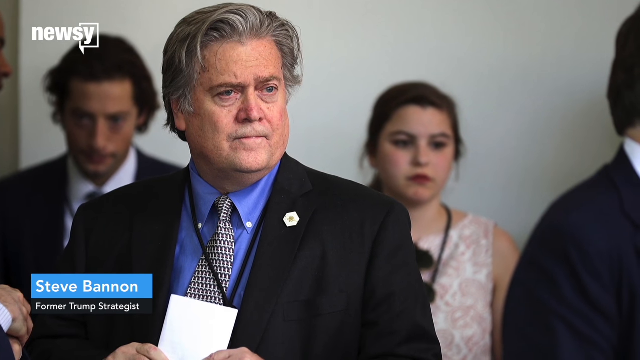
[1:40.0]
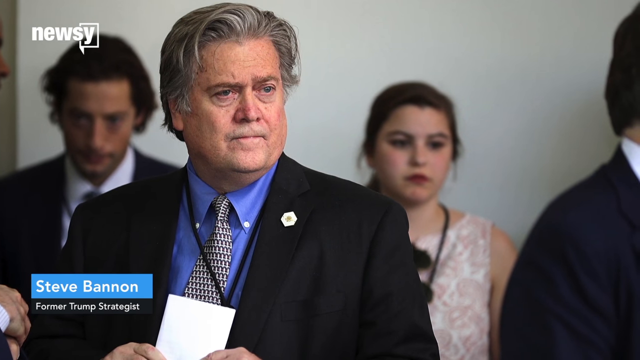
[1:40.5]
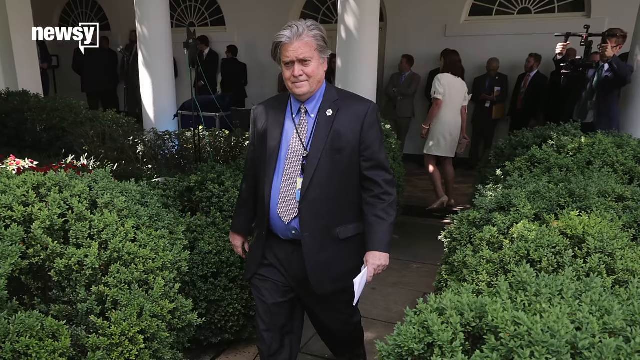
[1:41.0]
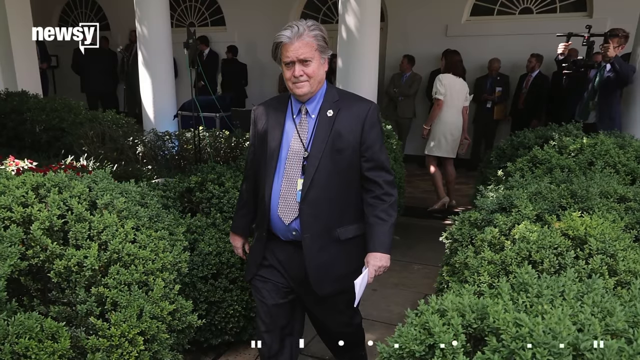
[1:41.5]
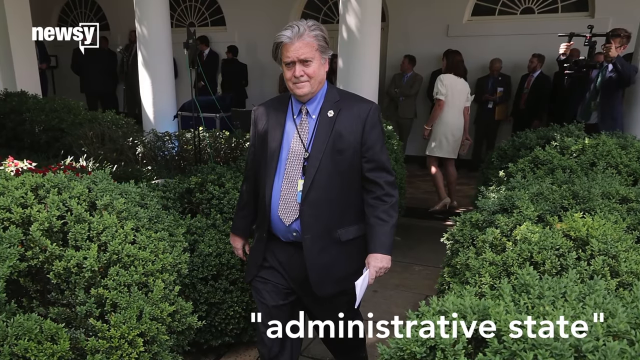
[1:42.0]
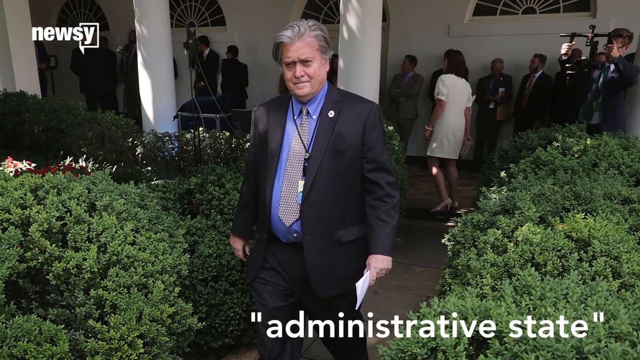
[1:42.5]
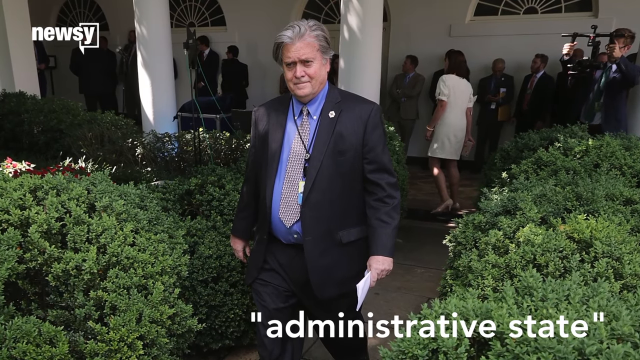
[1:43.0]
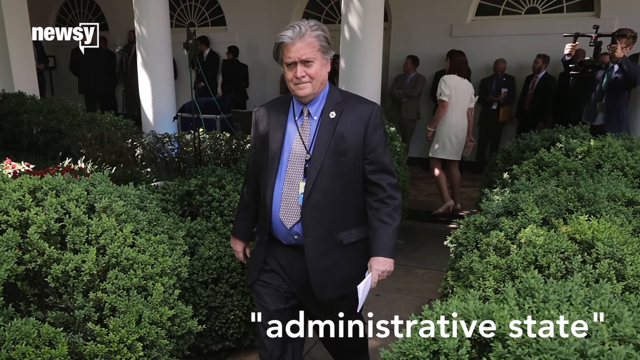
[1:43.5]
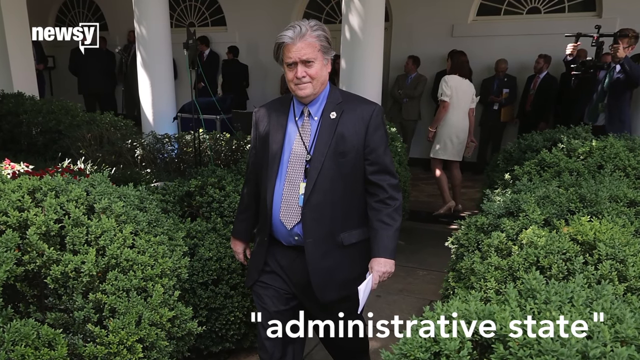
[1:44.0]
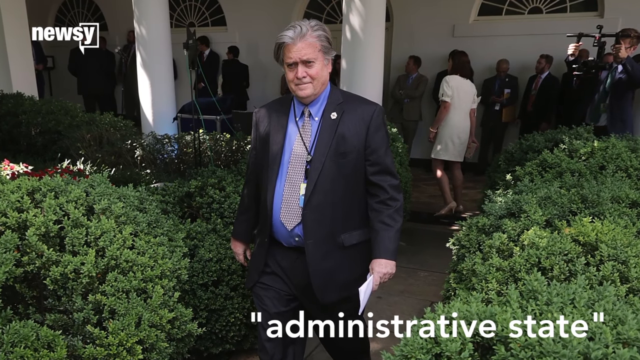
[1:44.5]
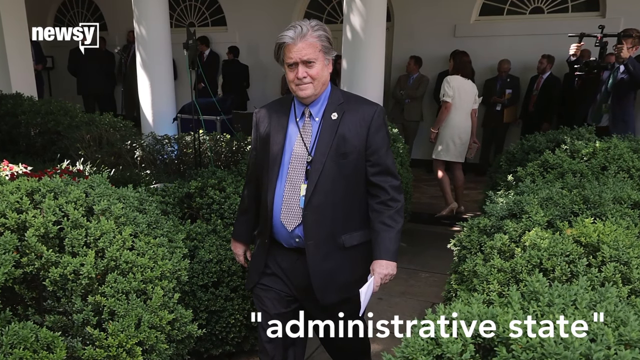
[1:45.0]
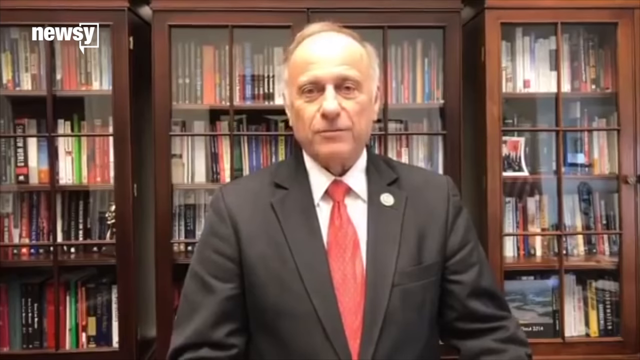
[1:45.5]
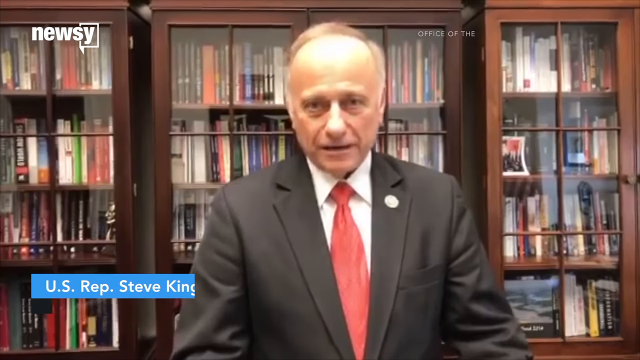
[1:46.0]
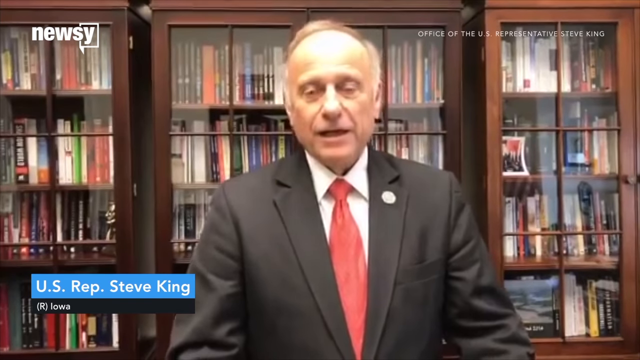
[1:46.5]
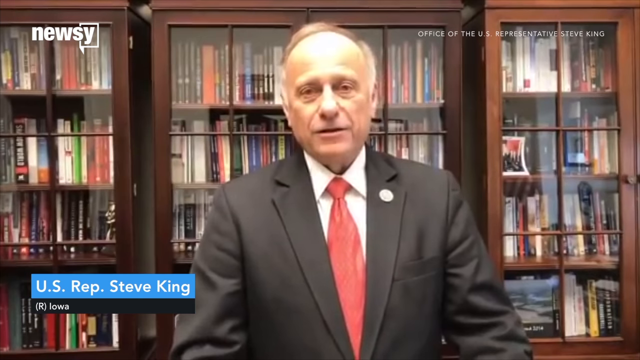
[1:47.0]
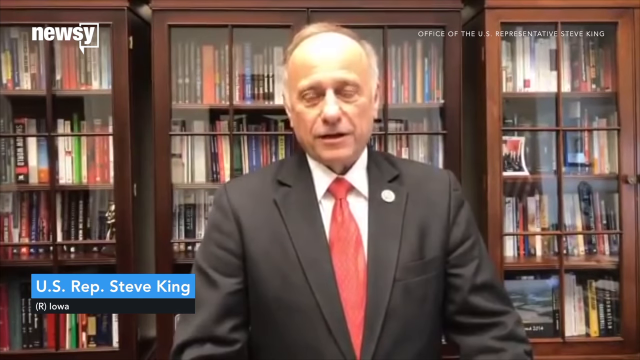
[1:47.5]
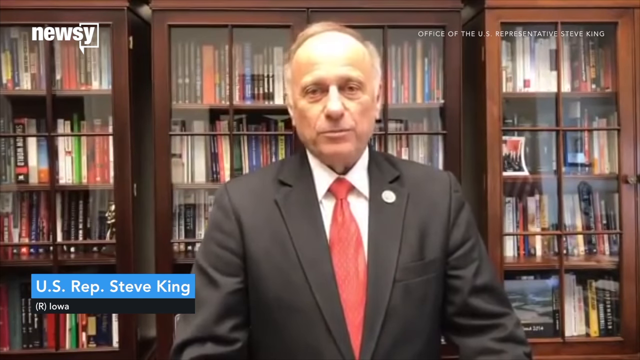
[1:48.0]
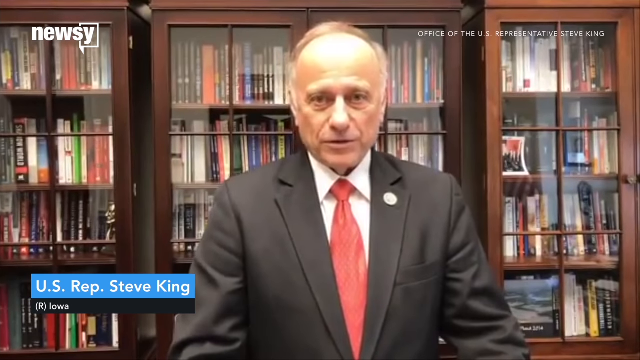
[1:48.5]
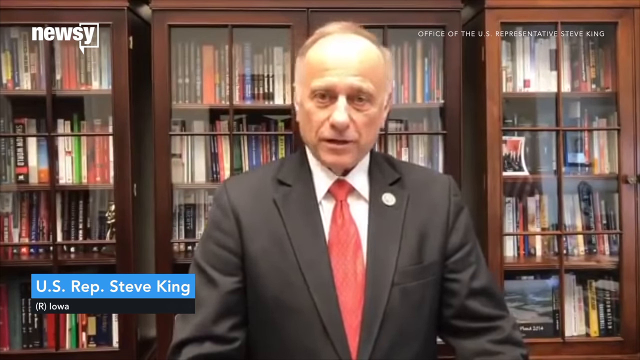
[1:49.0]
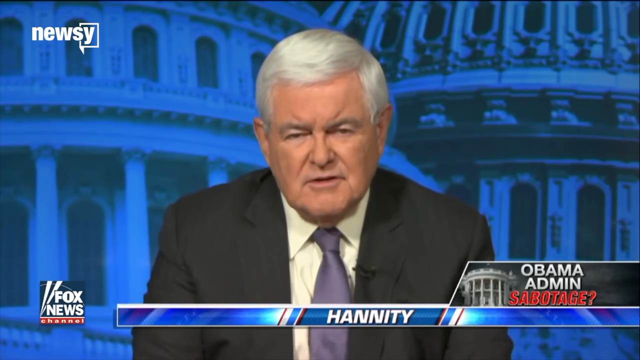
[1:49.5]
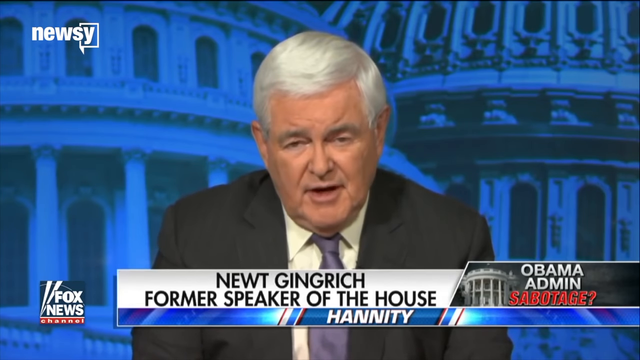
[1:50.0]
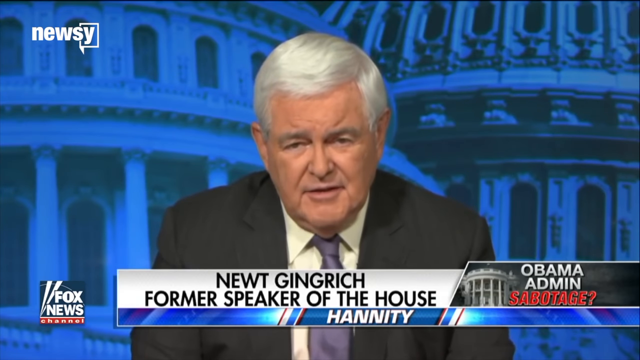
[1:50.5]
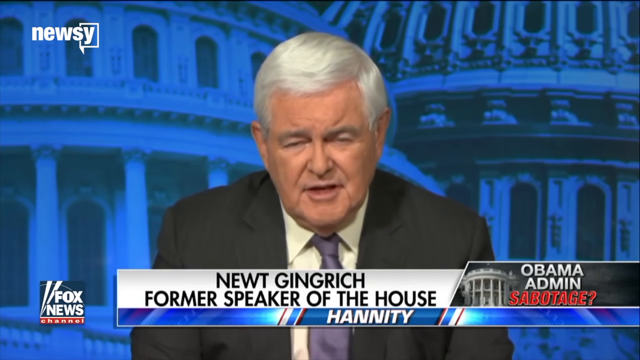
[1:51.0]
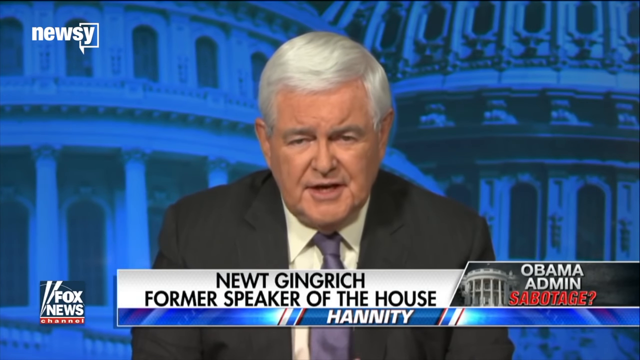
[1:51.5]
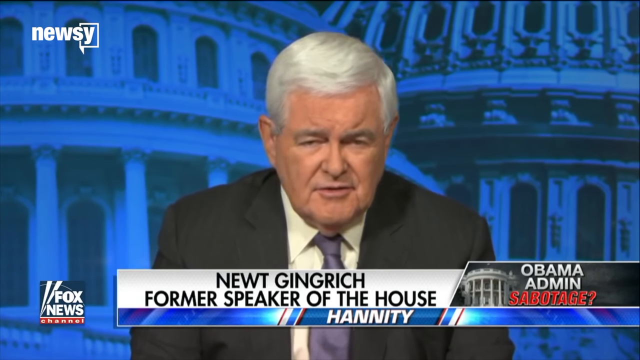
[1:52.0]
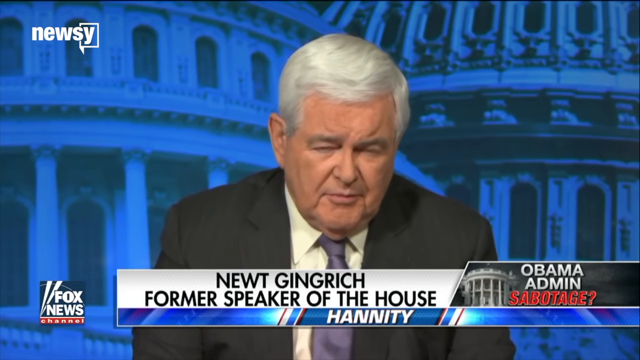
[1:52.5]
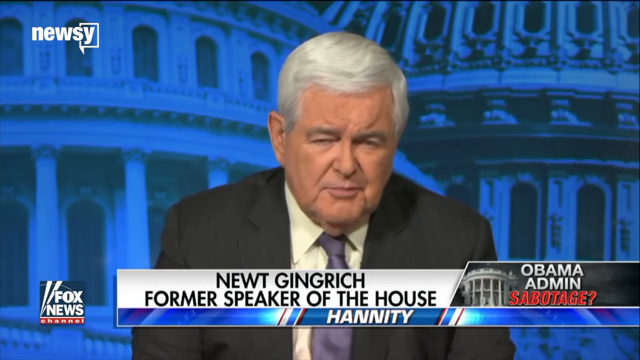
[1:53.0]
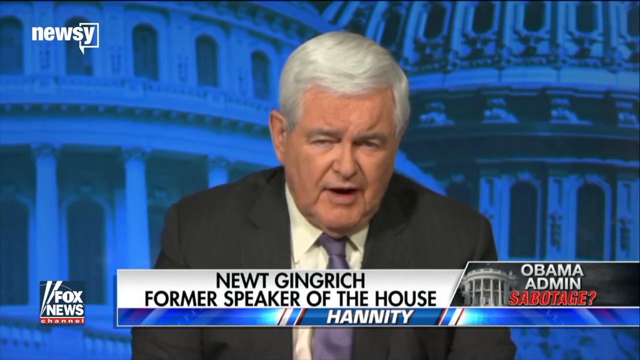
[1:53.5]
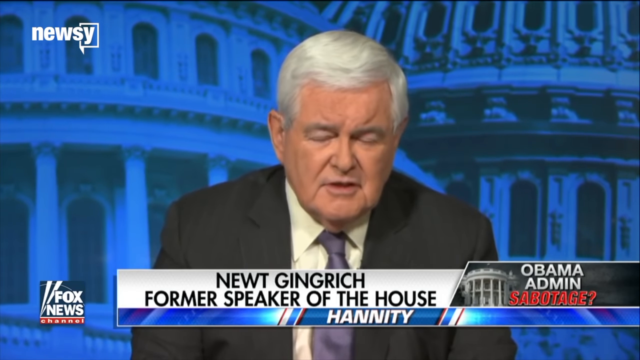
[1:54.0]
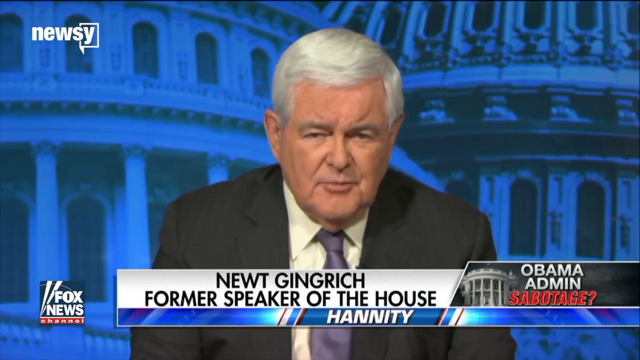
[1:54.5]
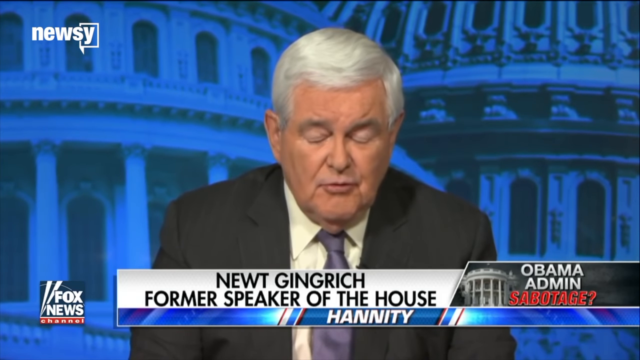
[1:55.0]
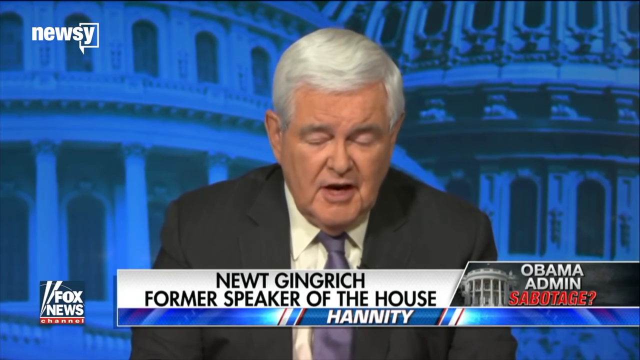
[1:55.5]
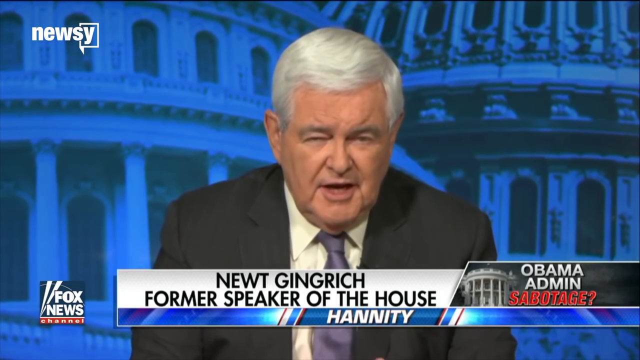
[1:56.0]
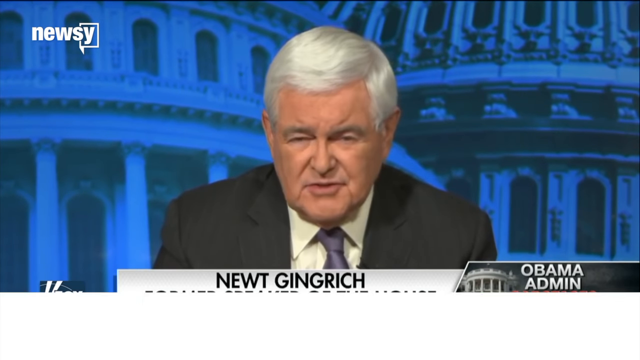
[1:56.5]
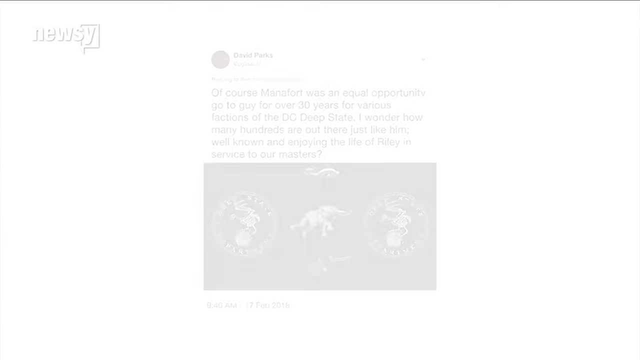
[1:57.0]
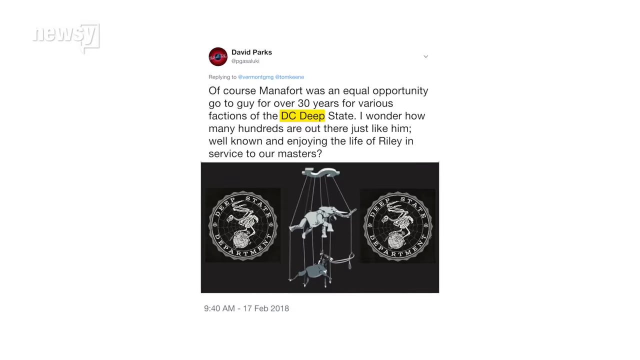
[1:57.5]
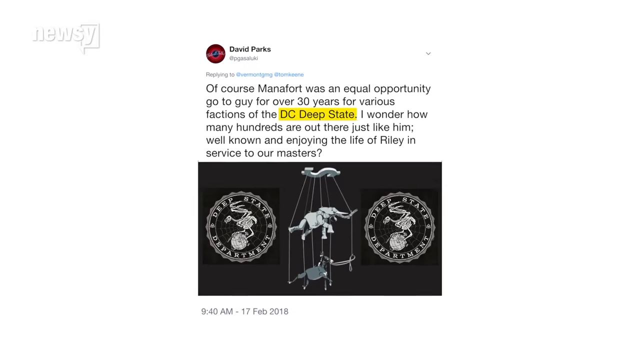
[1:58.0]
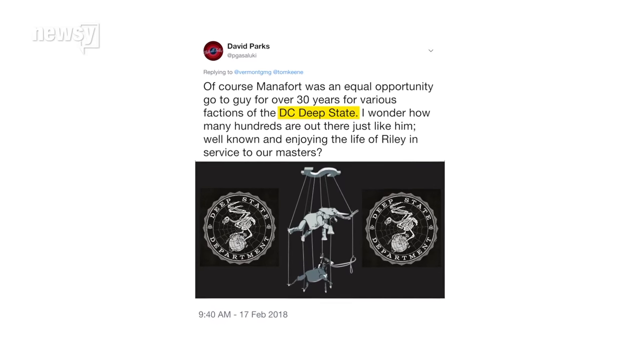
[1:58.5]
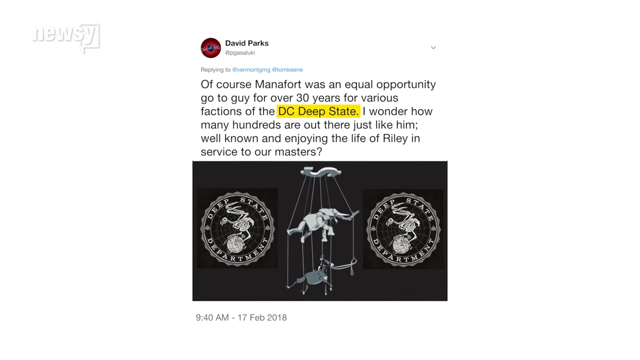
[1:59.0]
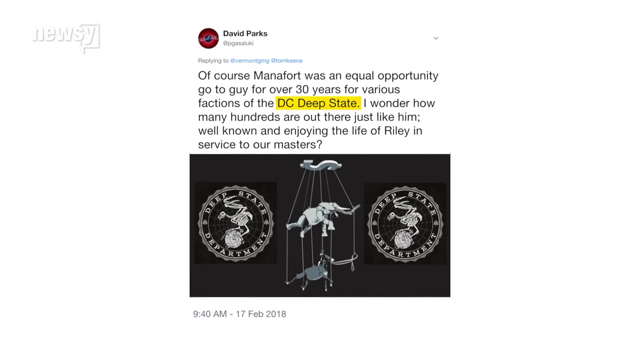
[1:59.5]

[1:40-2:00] A man's name appears in the captions, "Steve Bannon," "former Trump Strategist," and a couple of people are with him, including a woman behind him. People wear lanyards in front of a bookcase with glass in it. Newt Gingrich, the former speaker of the house, appears, with "Hannity" underneath where he is sitting, "Obama administration" on the right, and the word "sabotage." An article pops up with the part saying "DC Deep State" highlighted; it reads "of course Manafort was an equal opportunity go-to guy for over 30 years for various factions of the DC Deep State. I wonder how many hundreds are out there just like him. Well known and enjoying the life of Riley in service to our masters." Something like an elephant puppet is on the screen. Another quote pops up: "why don't you fk off little # mouthpiece so amusing you can't tell the deep state is all around you and killing you for profit but go beat up some Trump supporters and get back to us about what that accomplished." A deep state network is shown, with a lot of connected circles.